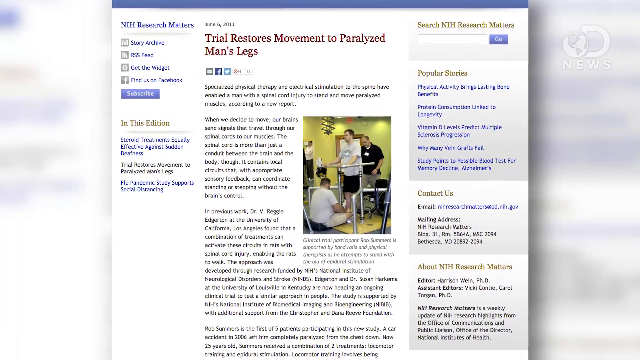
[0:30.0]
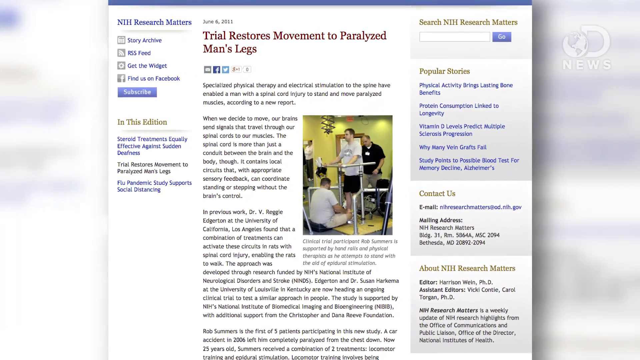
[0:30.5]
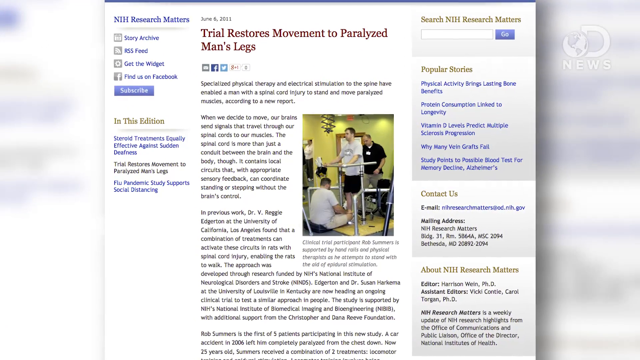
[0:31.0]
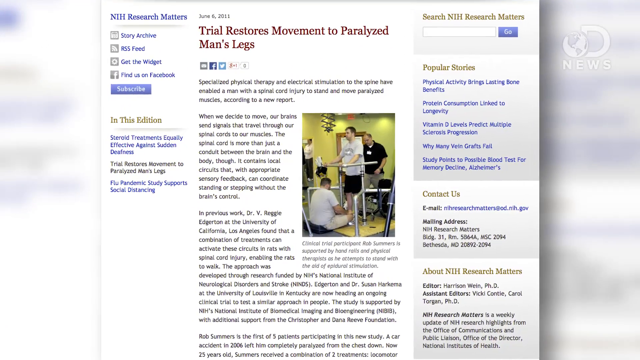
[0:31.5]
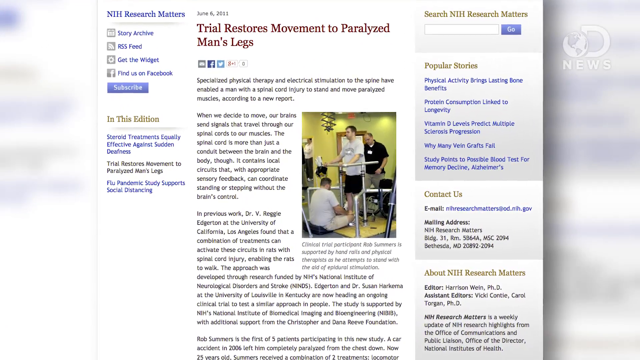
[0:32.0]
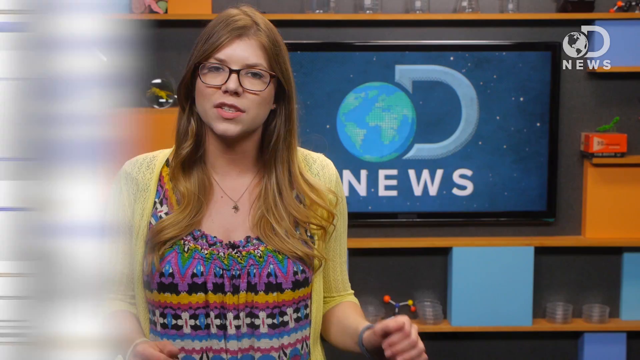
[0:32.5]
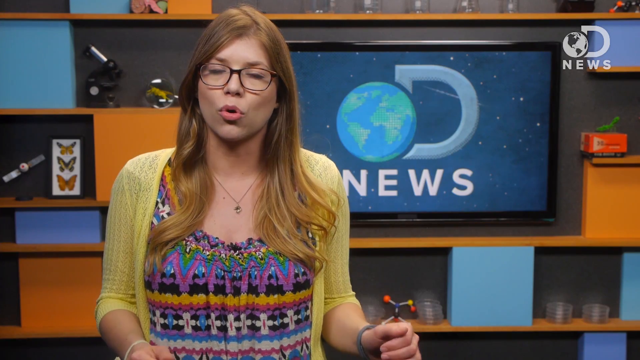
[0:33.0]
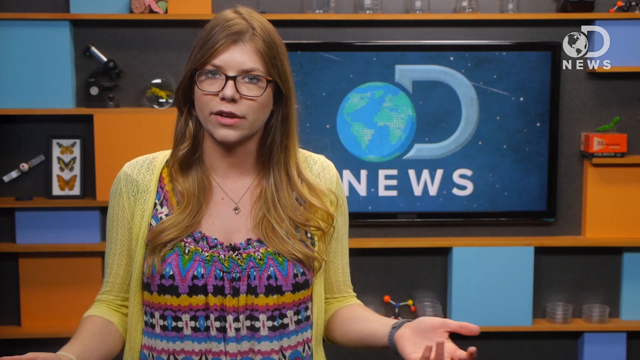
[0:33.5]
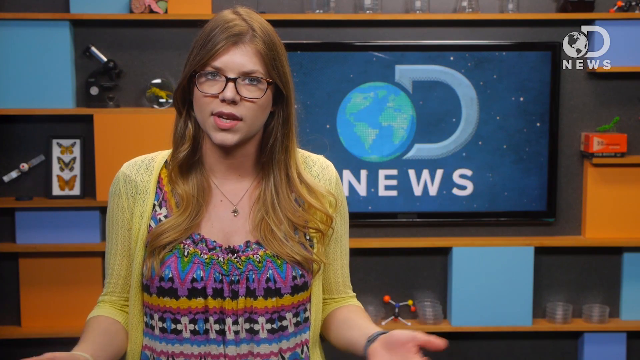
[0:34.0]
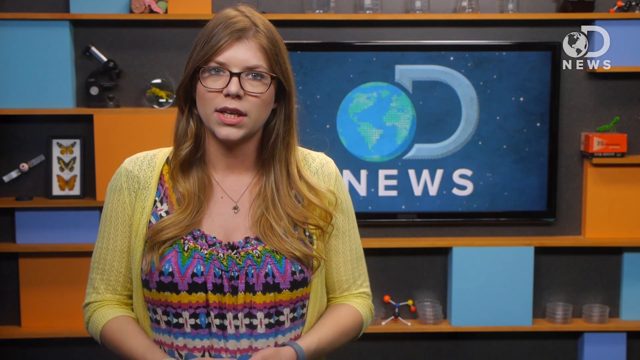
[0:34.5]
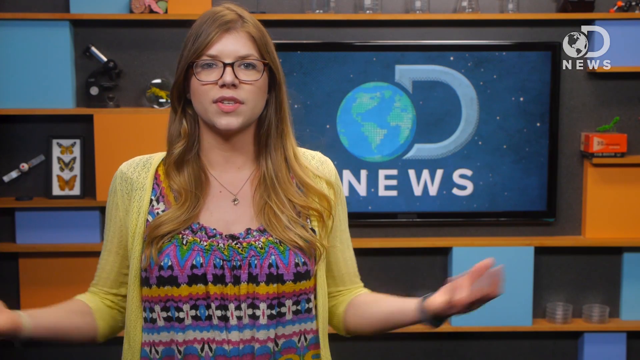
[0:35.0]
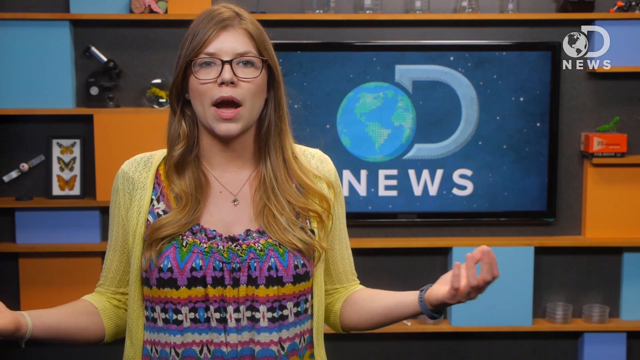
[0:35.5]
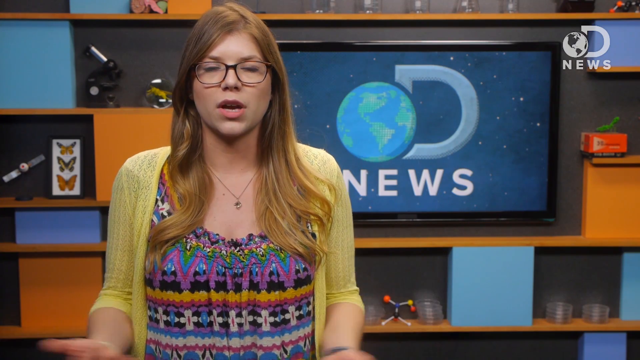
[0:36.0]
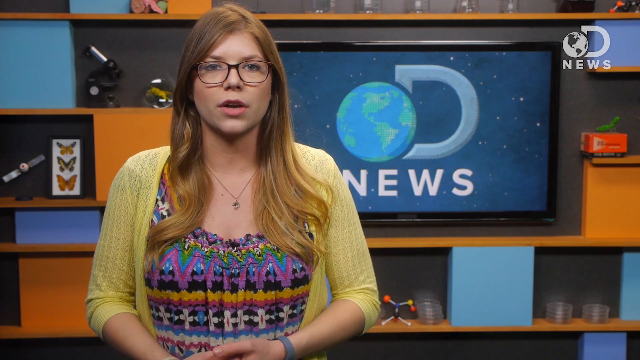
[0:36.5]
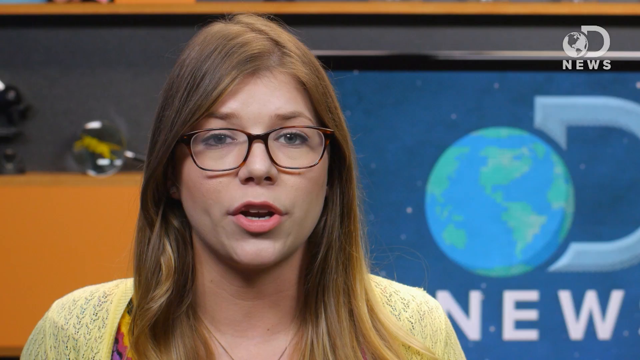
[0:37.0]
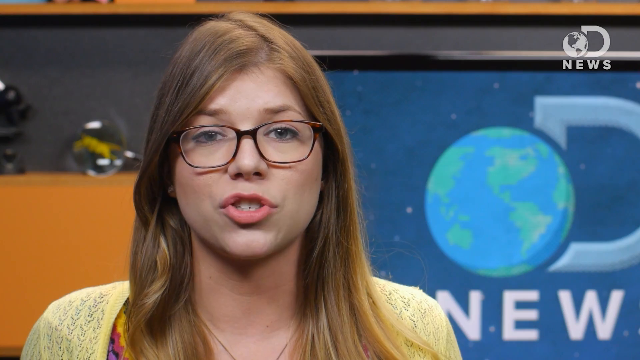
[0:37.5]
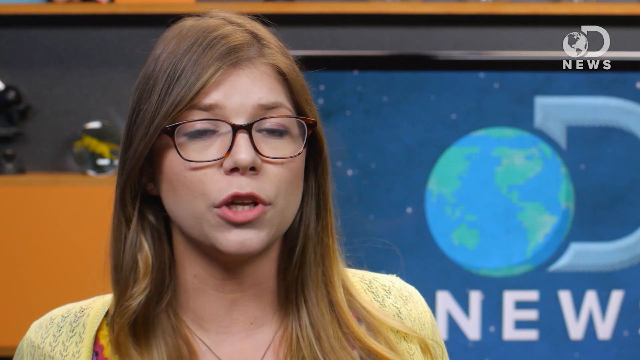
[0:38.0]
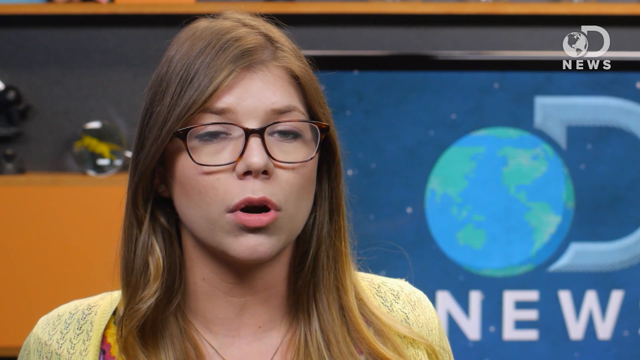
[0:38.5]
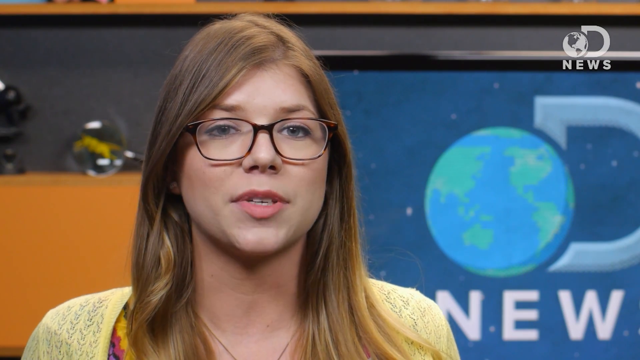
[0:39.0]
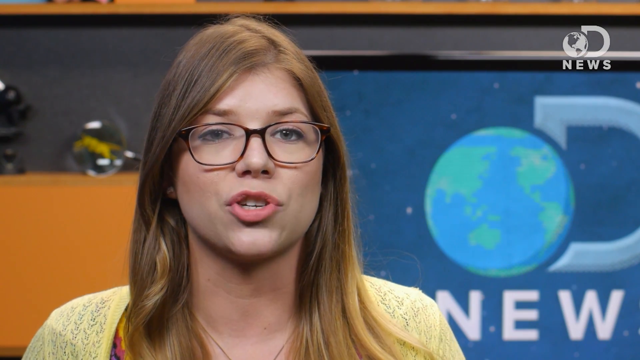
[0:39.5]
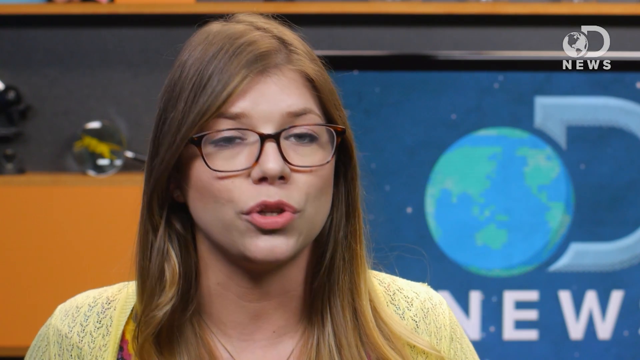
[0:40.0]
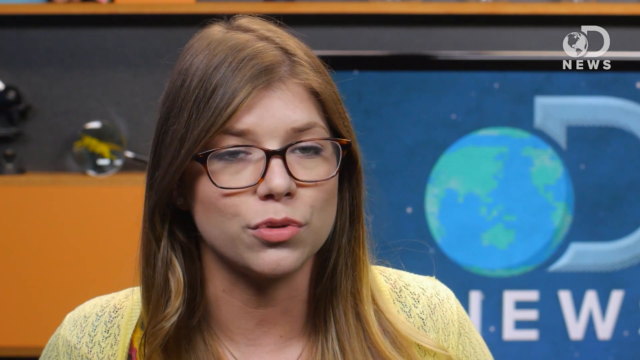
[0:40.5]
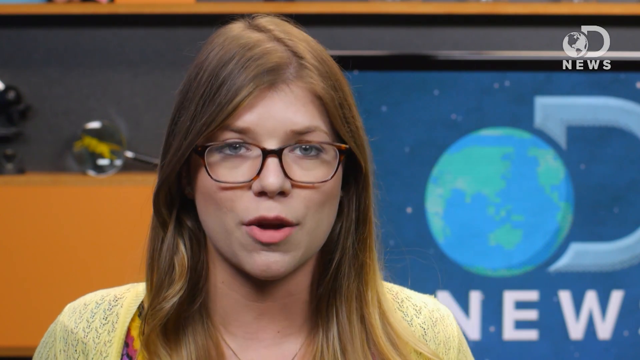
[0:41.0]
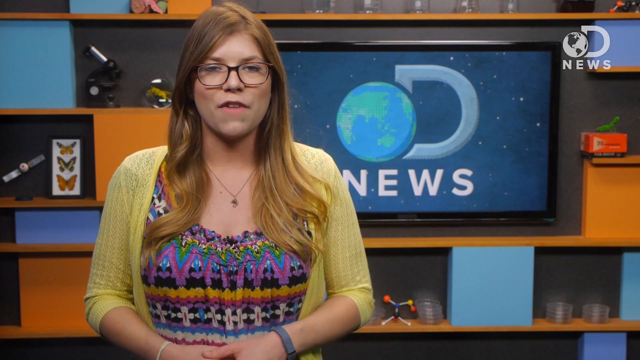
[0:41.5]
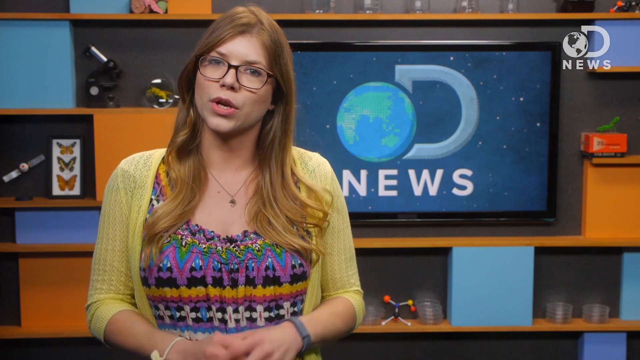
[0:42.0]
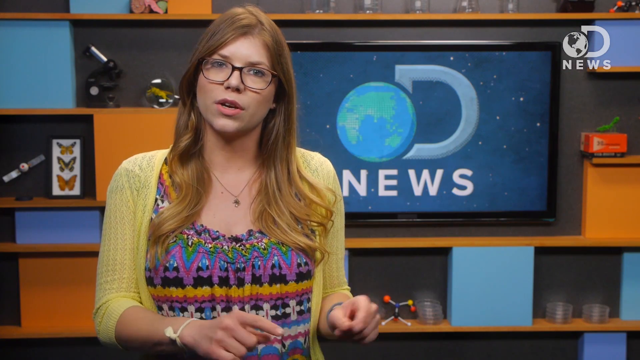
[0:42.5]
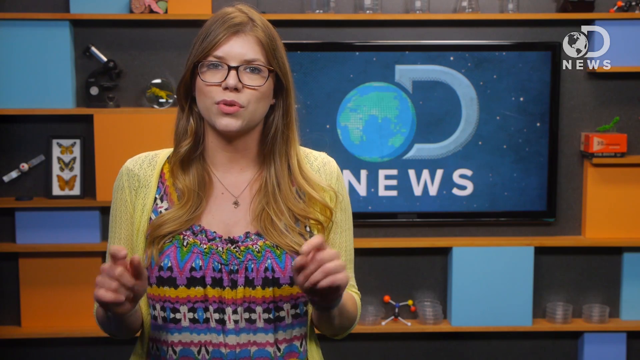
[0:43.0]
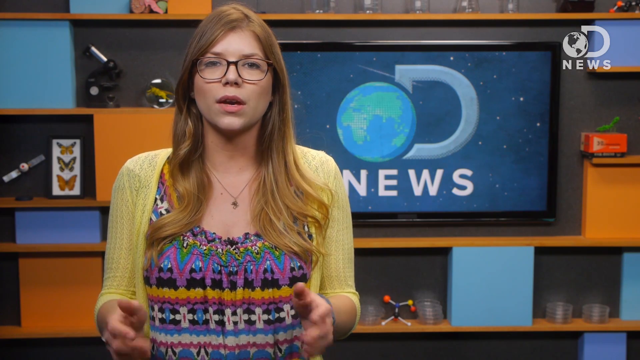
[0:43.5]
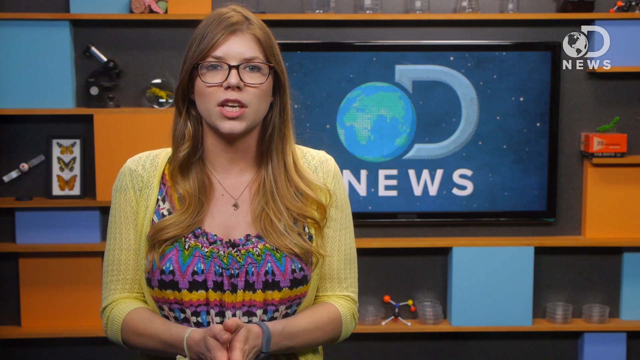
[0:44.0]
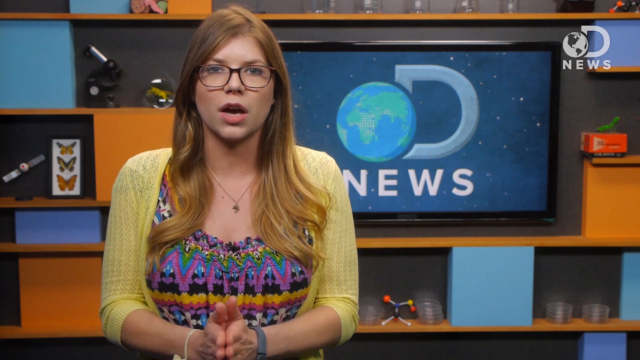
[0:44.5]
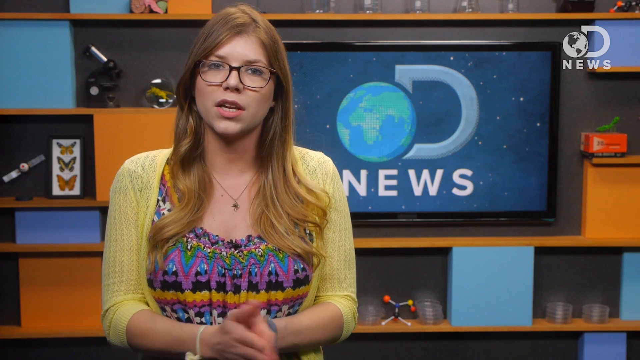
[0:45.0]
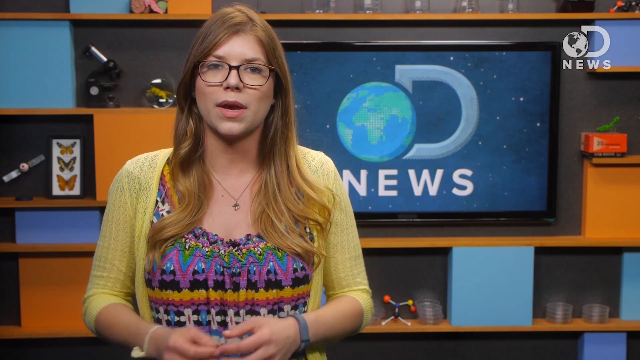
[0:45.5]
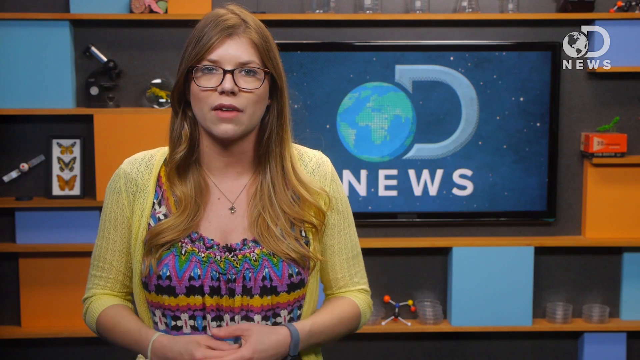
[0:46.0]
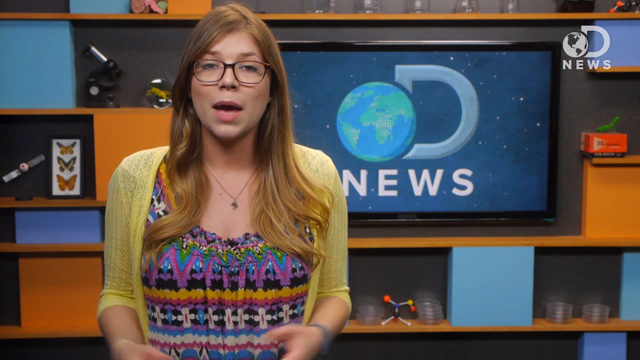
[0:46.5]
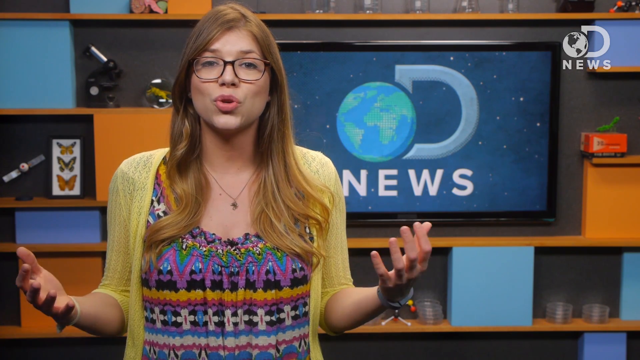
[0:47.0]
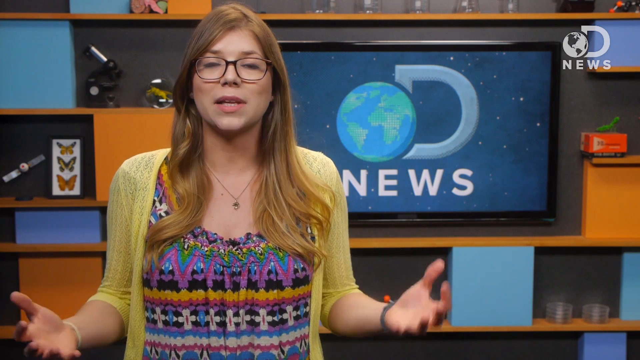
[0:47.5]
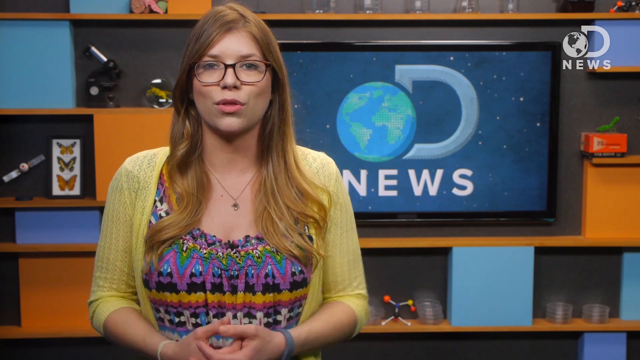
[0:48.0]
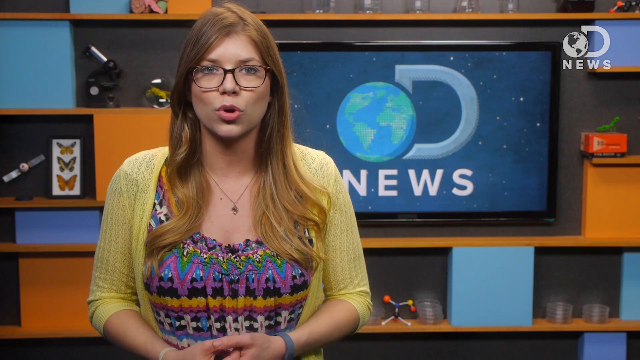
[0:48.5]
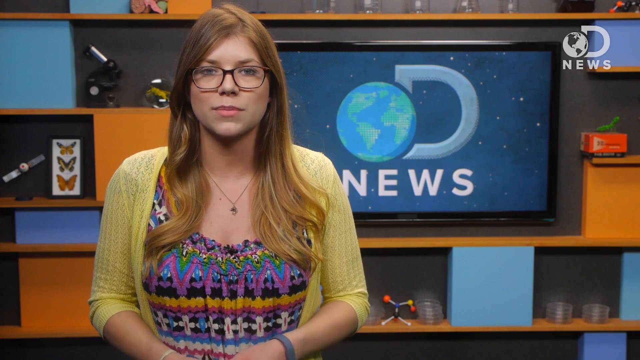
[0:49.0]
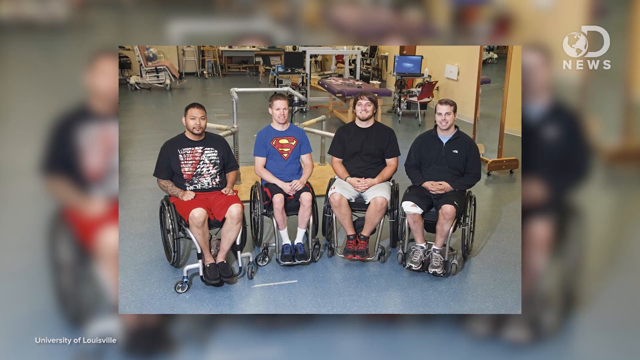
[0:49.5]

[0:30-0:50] An image of a news article from a website is shown, titled "Trial Restores Movement to Paralyzed Man's Legs." The camera zooms in on the image for a few seconds before the image and its white background fly off screen. The video cuts back to the woman in the Discovery News studio. As she begins to speak, she lifts her hands in front of her, palms turned slightly upward, brings them back down a few inches, and folds them in front of her. Almost immediately she throws them out to her sides at about 90 degrees, fingers curled slightly upward, then swings them back in front of her. The shot cuts to her filmed from about the shoulders up as she continues speaking into the camera, then pulls back to a waist-up view as she wiggles her shoulders from side to side. She pinches the index and middle fingers of both hands together with her thumbs, folds the other fingers in, and points downward twice, then repeats this gesture on the other side of her body. She folds her hands in front of her again, throws them out wide and pushes them downward to make a point, then folds them in front of her a final time. The video then briefly cuts to an image of four men in wheelchairs.